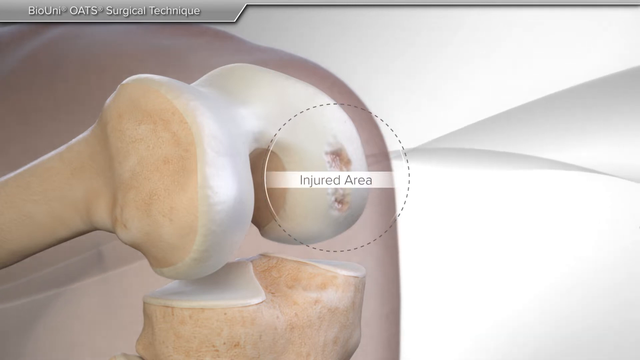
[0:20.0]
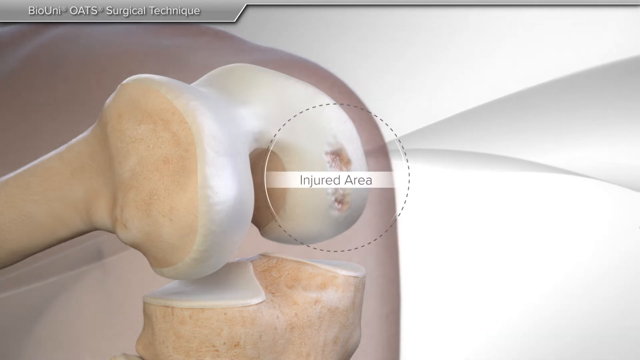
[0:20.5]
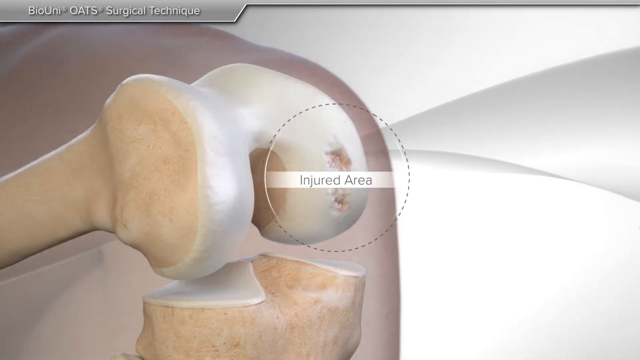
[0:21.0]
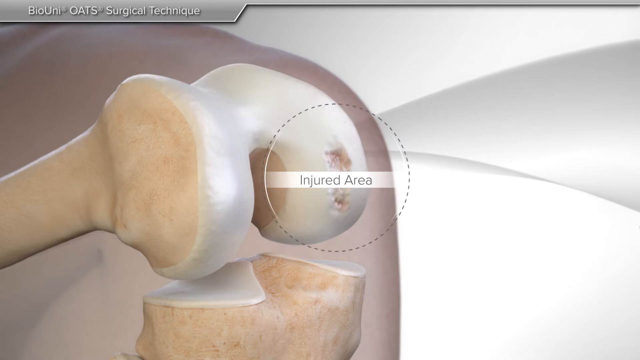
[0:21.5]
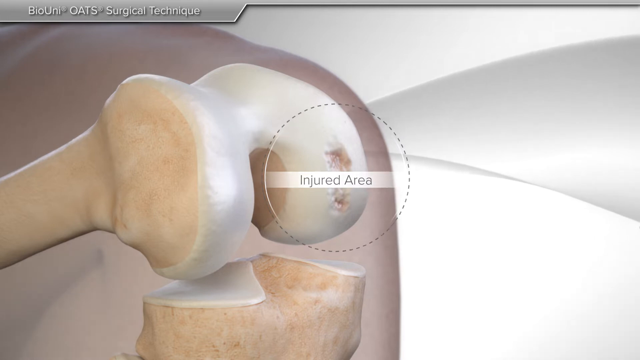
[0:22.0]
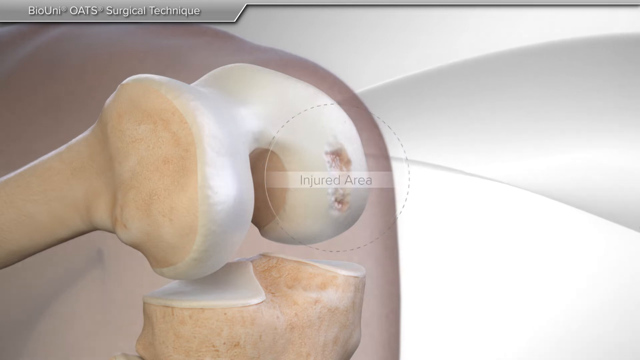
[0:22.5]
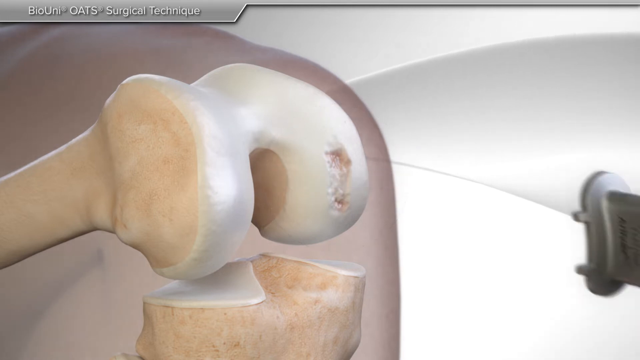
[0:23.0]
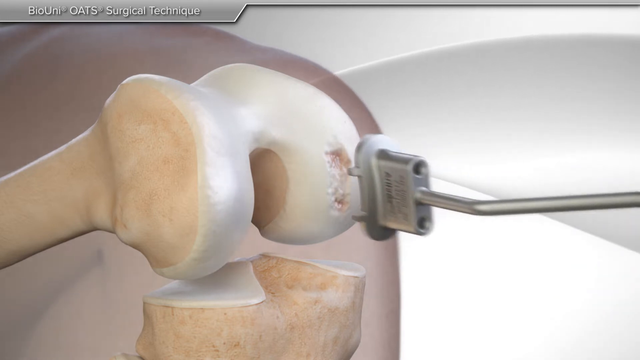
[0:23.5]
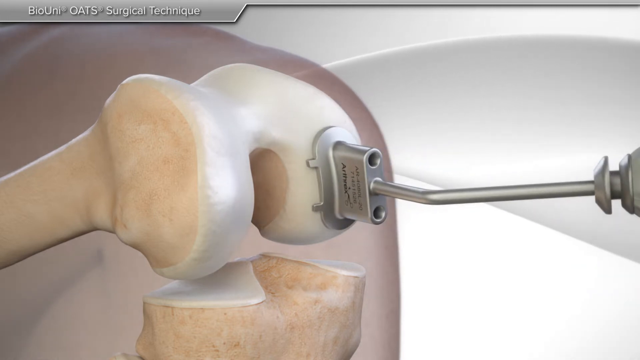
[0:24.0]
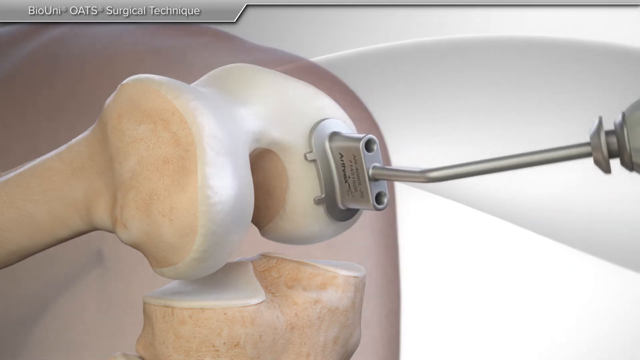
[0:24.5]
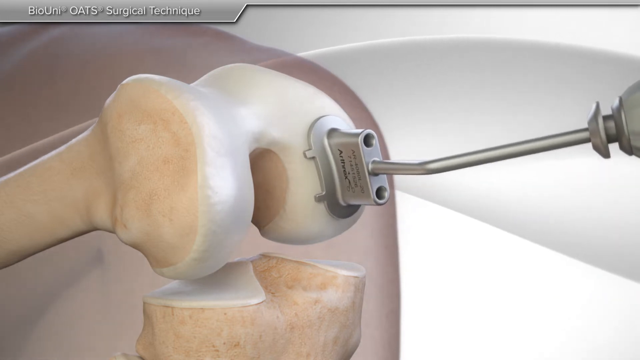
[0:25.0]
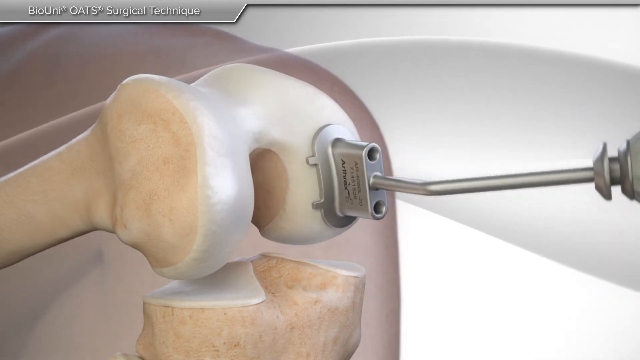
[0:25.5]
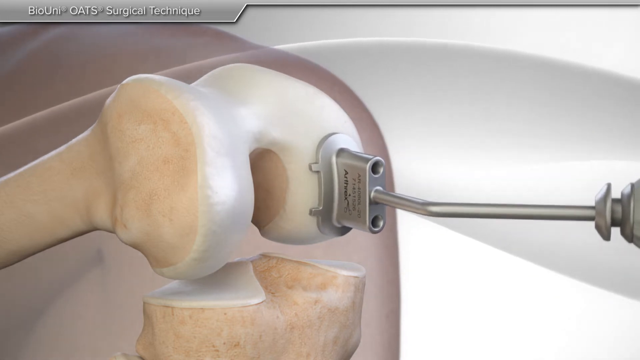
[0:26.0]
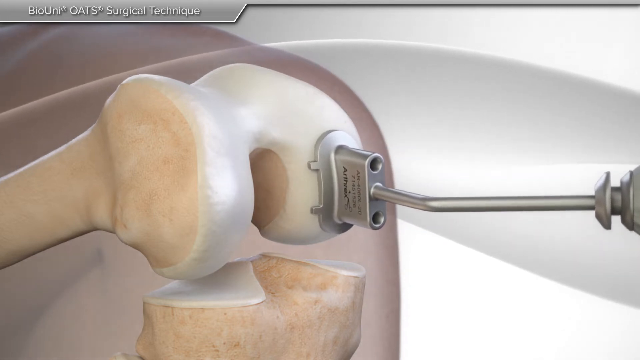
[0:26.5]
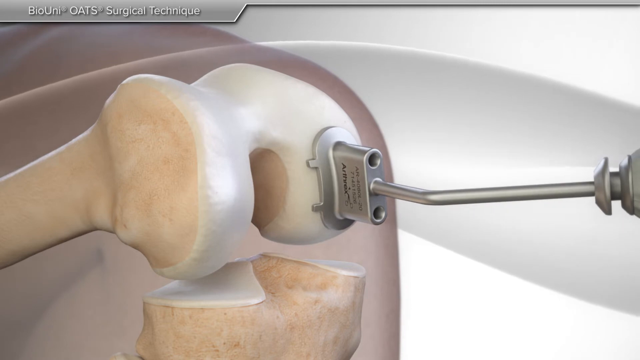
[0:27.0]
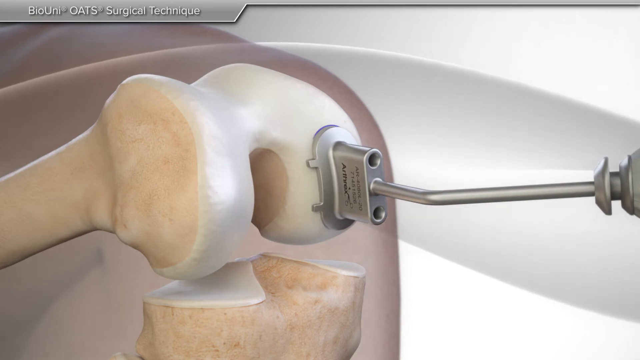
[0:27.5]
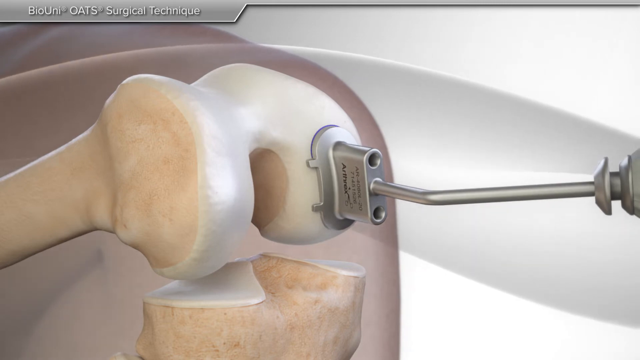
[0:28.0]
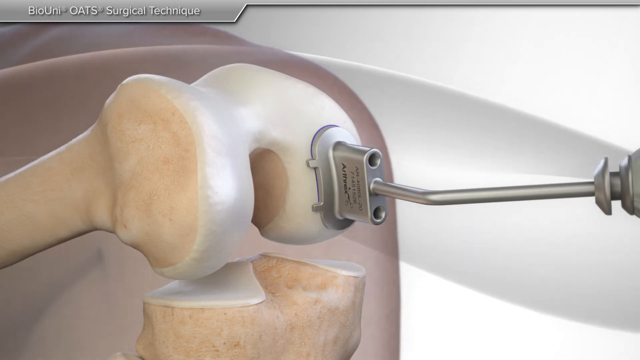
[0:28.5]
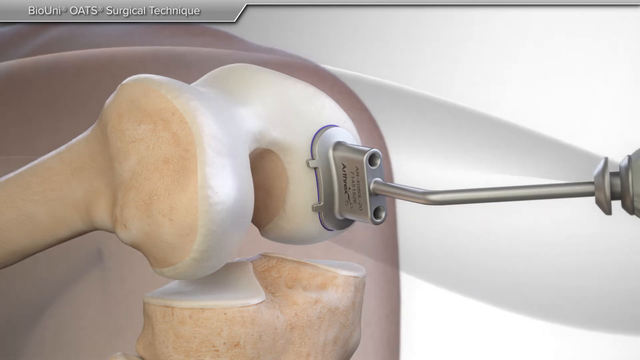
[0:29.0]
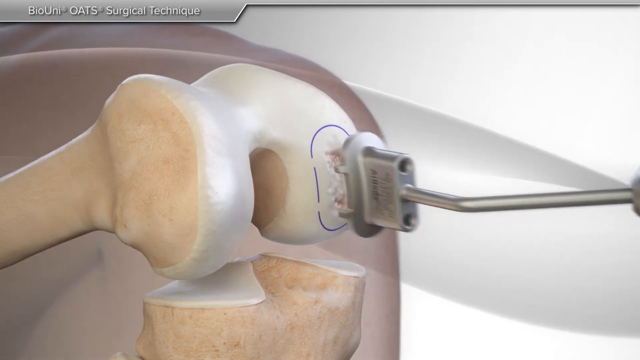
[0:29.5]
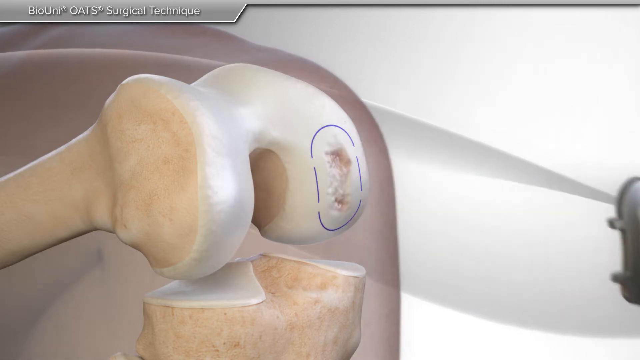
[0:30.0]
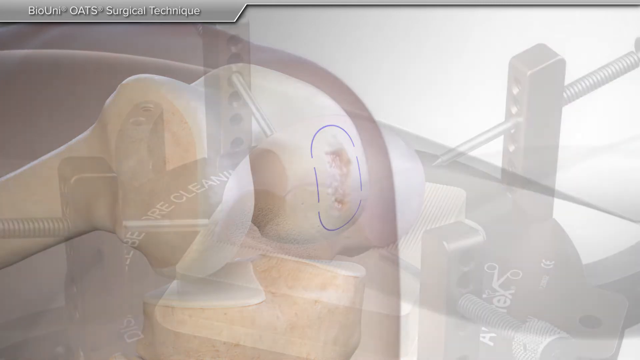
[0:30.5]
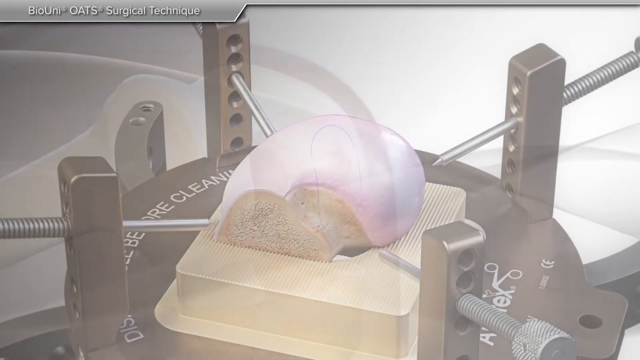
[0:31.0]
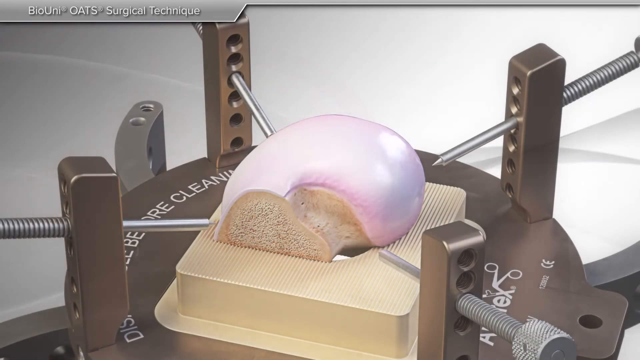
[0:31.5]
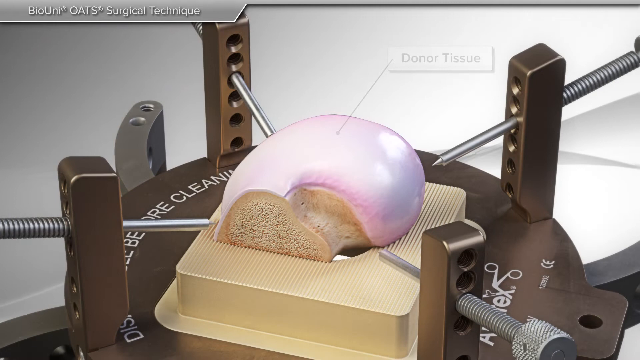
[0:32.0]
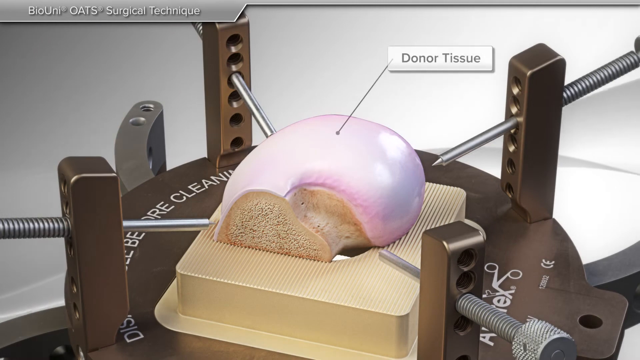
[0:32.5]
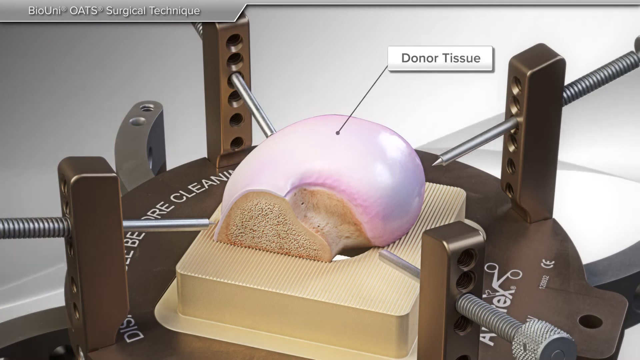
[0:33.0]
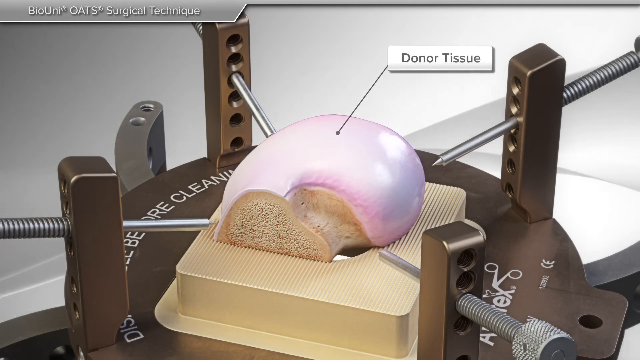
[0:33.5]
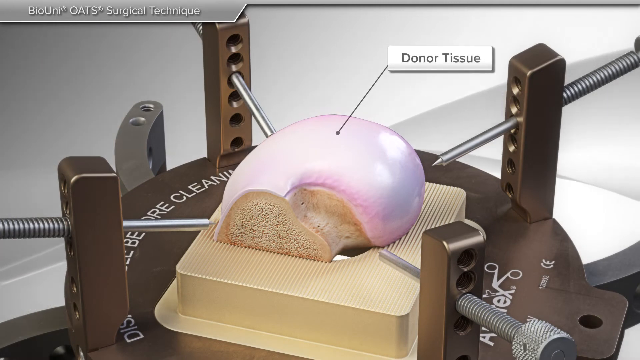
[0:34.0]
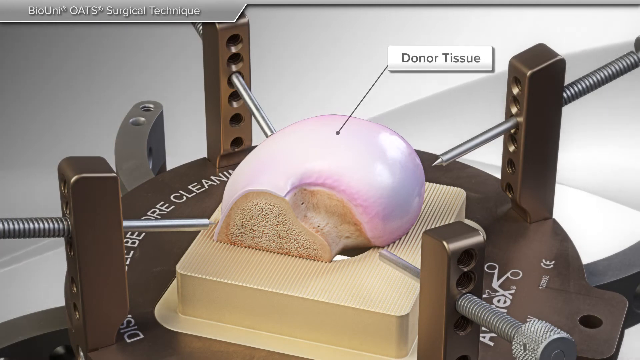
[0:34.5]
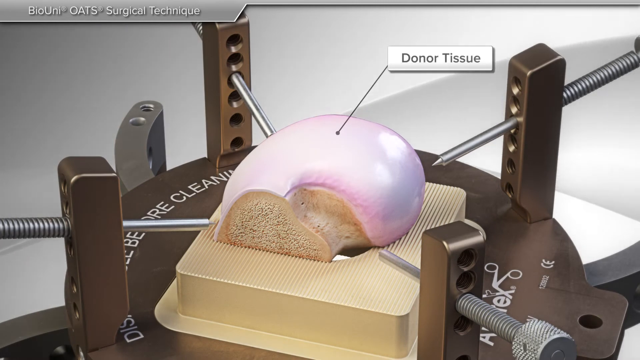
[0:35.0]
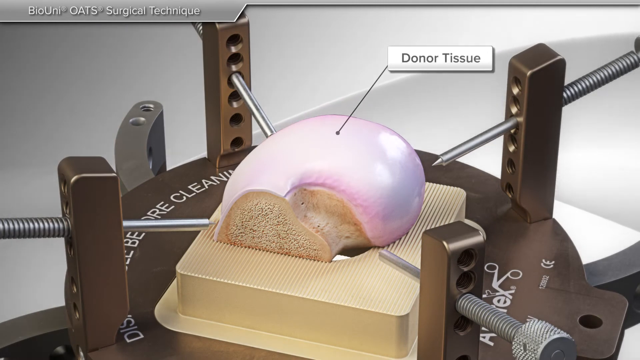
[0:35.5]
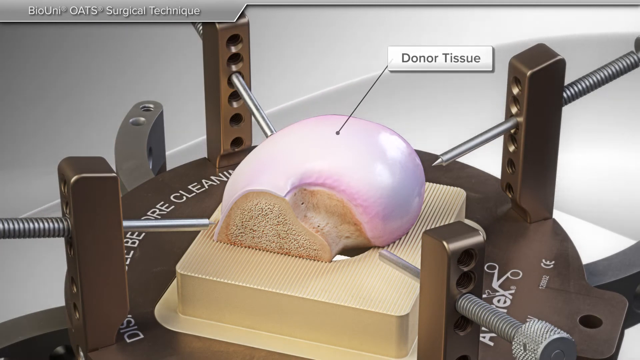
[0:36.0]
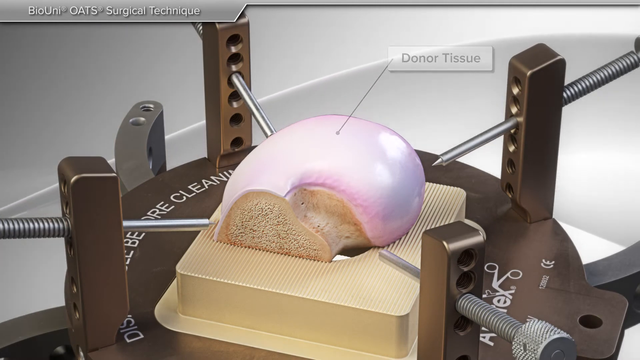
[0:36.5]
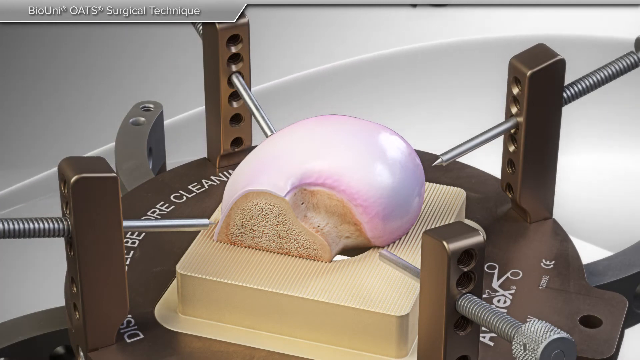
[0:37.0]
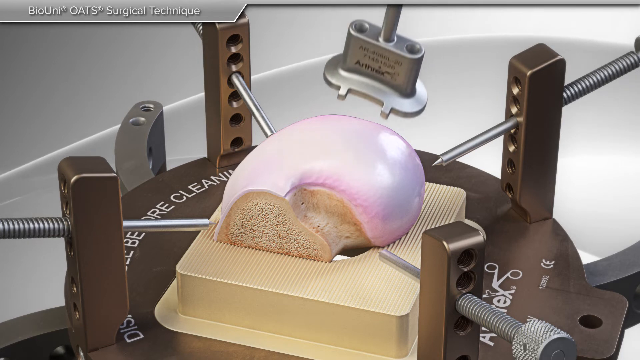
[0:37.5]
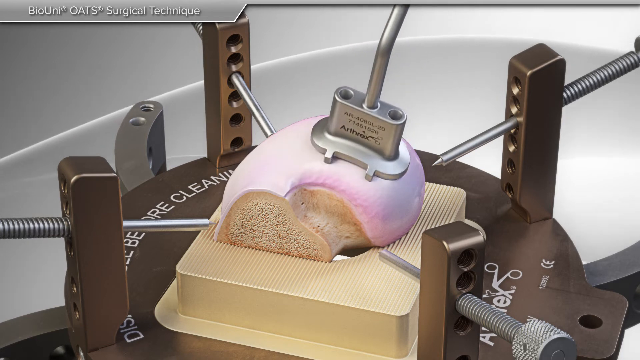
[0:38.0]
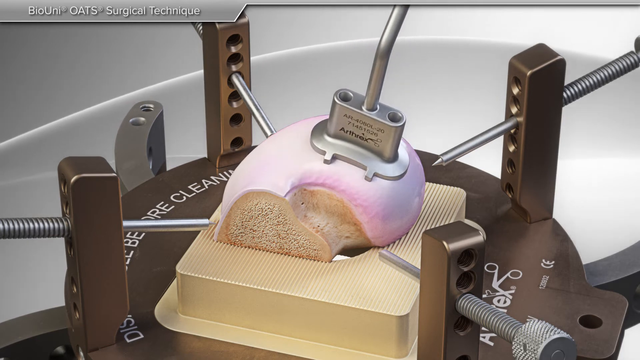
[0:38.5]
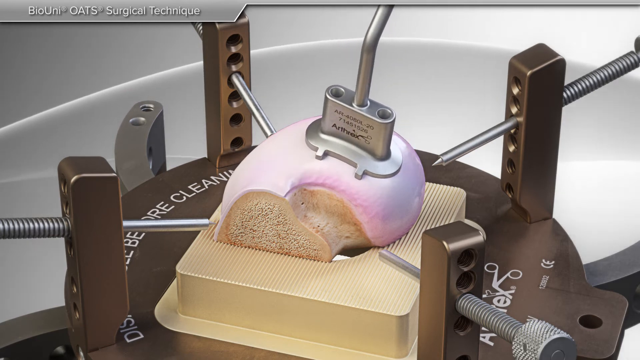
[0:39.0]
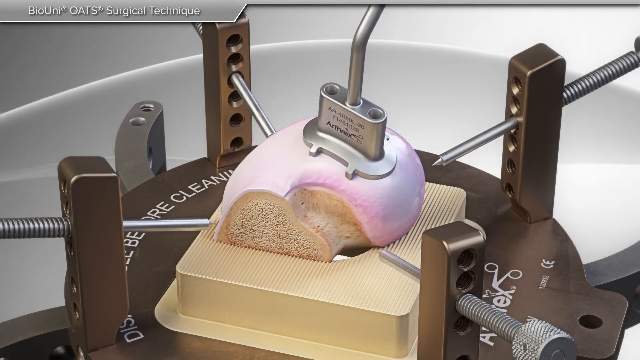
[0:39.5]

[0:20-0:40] The graphic continues with the circle marking the injured area of the knee joint. In diagram form, the exposed bone shows the injured area to the left. A grey metal device comes in from the right side of the screen toward the injured area; it has two prongs at the front which attach to the knee joint, and a long metal handle. The metal area moves up and down the knee joint. A blue line appears around the outside of the connecting area, which is then detached, leaving a blue outline on the knee joint around the damaged area. The screen then cuts to a machine with a circular base and four pillars with holes arising at four corners of the circle. Four screws with pointed ends go through the third hole down on each pillar, on the outside of the circle, and point toward a bone-like structure in the center of the circle on a raised cream platform with a ridged edge. A cut-through portion of bone is at the front; it looks like the knee joint. On top of the bone is a pink area or cover, with an arrow labeling it as donor tissue. The same attachment appears, with a sort of kidney-shaped base and four attachments coming out of either side of the kidney shape. It has a raised area behind it with three holes, and in the middle hole is a metal tube or wire. The kidney-shaped end comes toward the joint, prints onto the donor tissue on the surface of the joint, and moves around slightly.